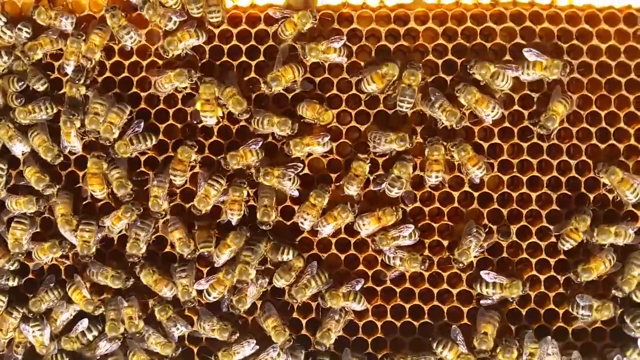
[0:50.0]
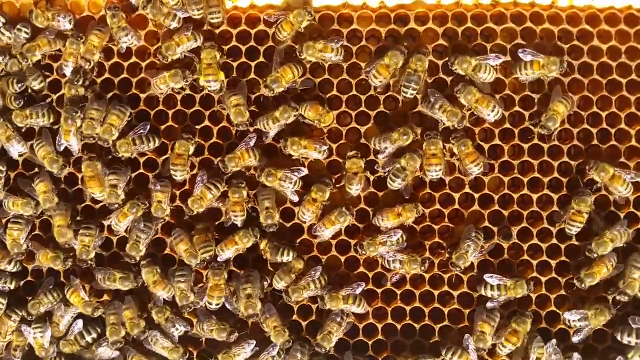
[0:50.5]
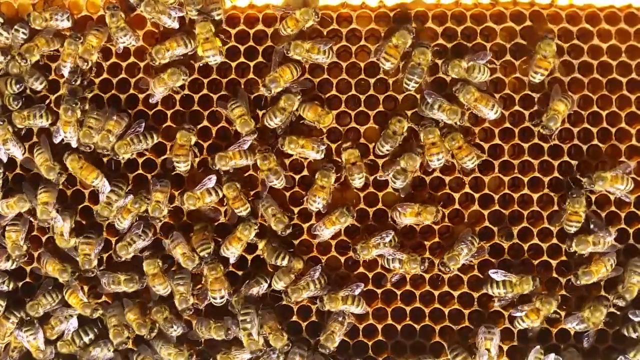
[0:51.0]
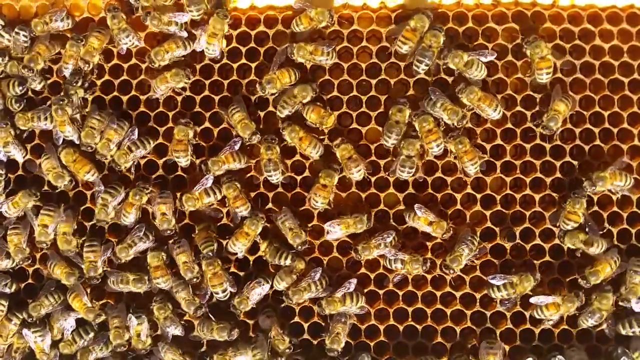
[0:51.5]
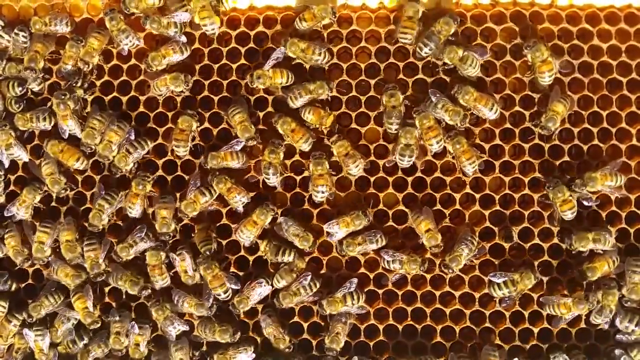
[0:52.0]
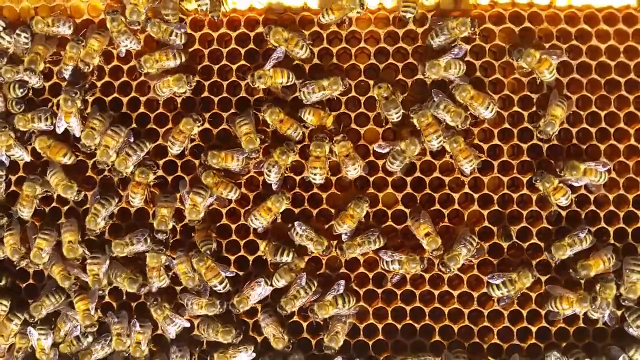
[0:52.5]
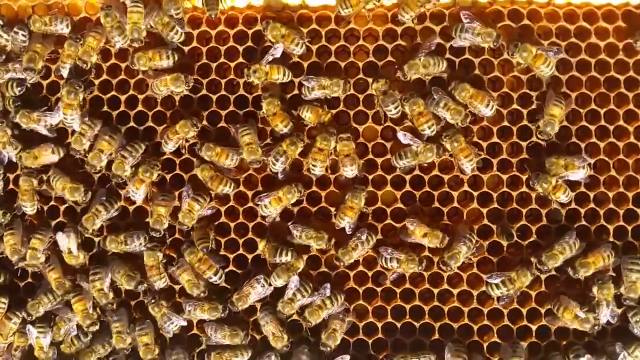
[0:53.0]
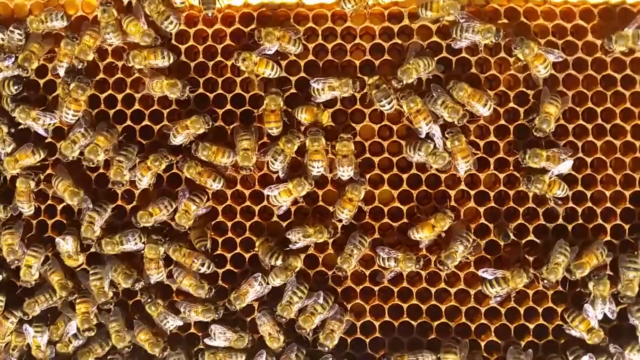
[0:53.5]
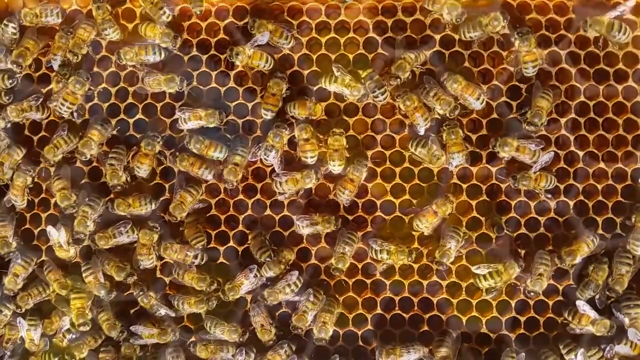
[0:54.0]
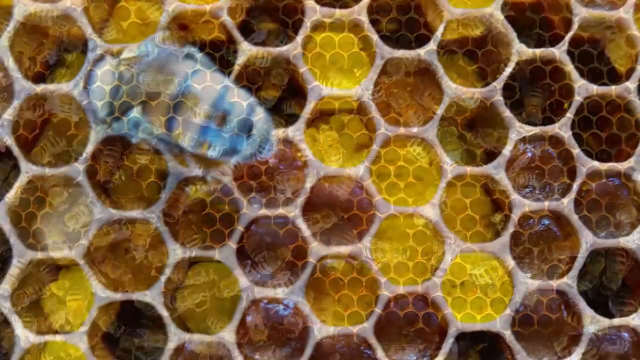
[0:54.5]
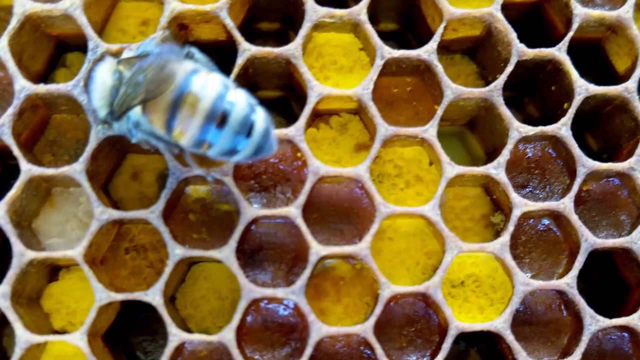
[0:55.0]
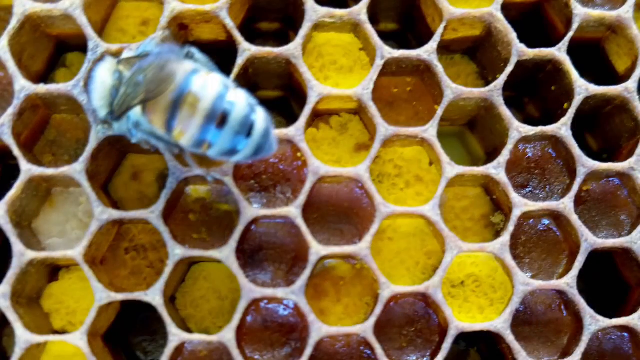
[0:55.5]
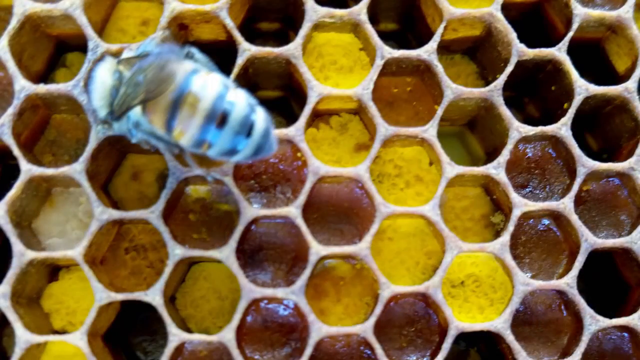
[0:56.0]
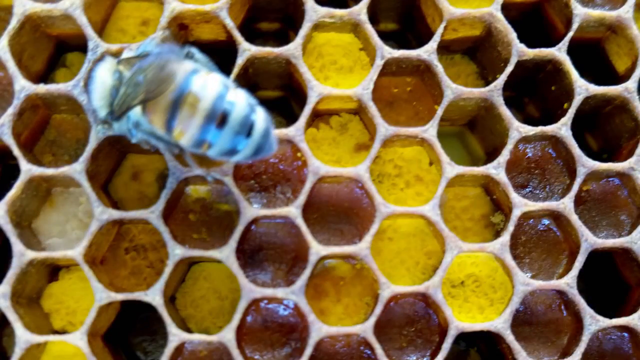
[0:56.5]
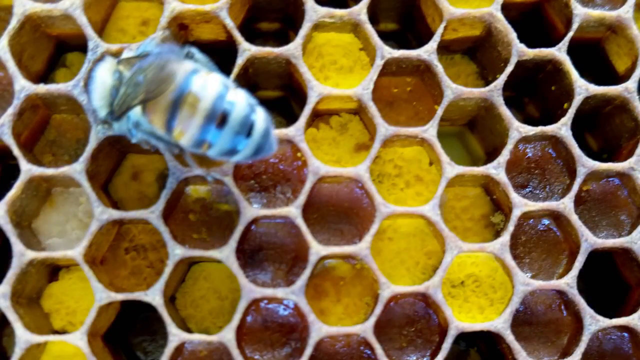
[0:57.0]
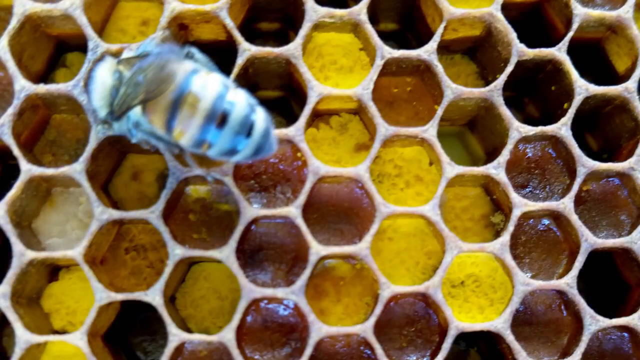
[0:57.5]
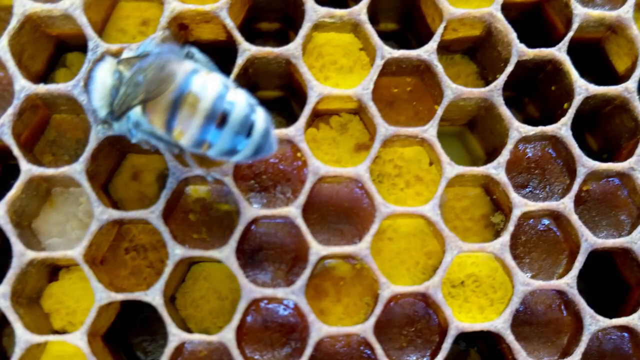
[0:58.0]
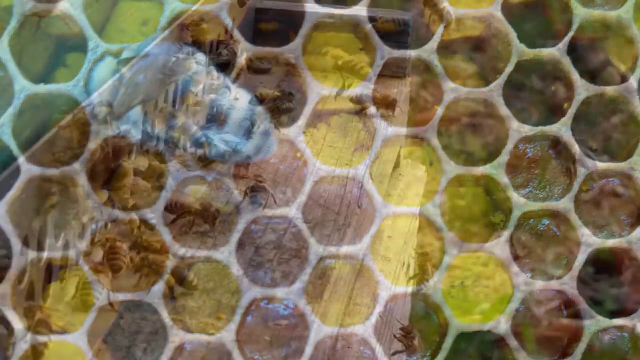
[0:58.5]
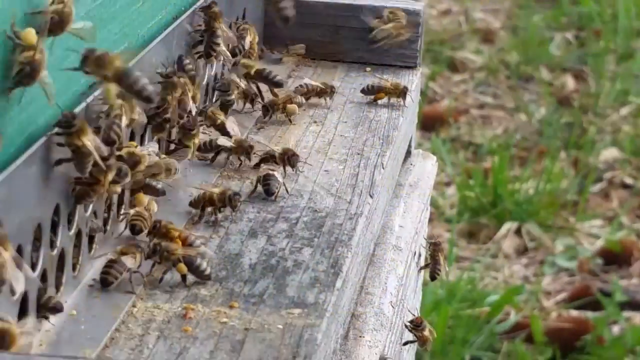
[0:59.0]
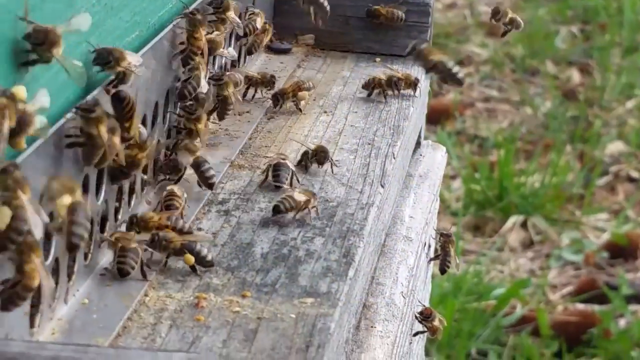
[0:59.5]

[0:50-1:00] A live view shows many bees in the honeycomb. It changes to a still image of the honeycomb with a bee in its upper left that appears blue and yellow and appears to be turning its head almost back toward the viewer. Footage follows of many bees going into a metal device with holes in it near the floor, an artificial nest. The blue bee is shown again, and then the bees going into the same device with holes near the floor.